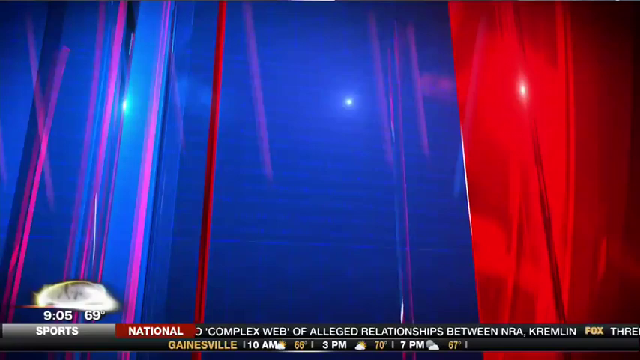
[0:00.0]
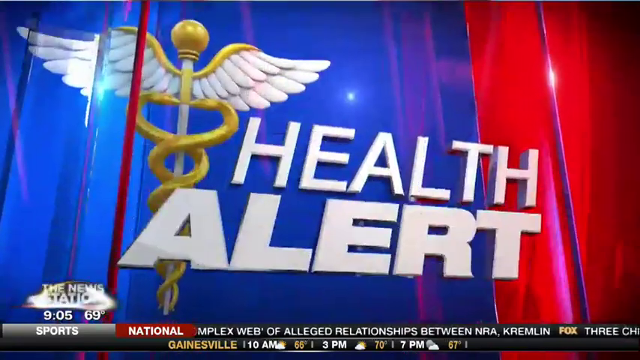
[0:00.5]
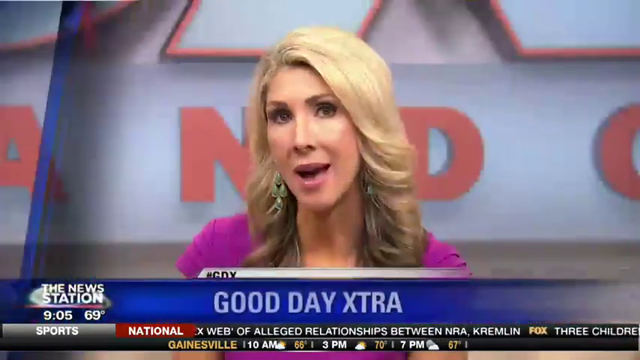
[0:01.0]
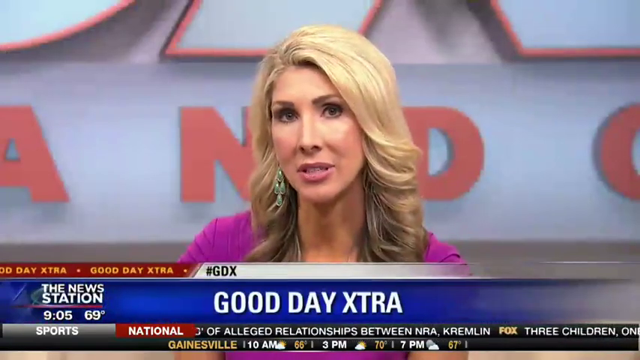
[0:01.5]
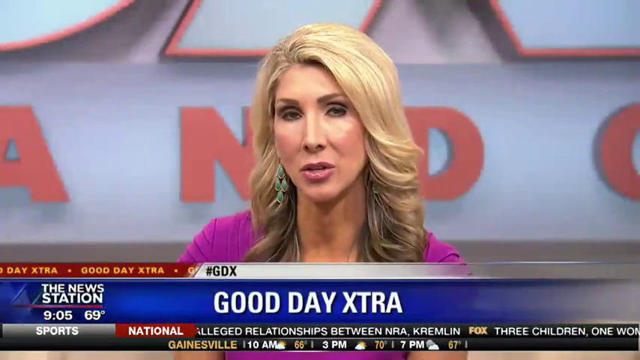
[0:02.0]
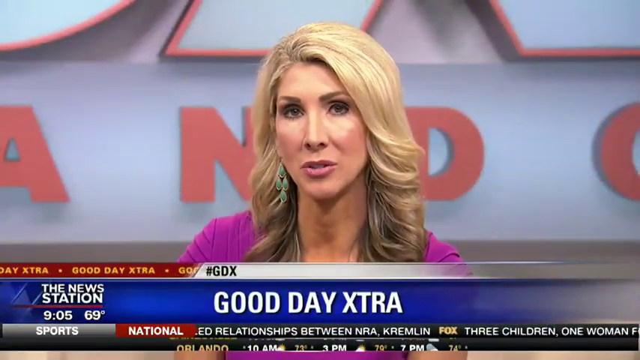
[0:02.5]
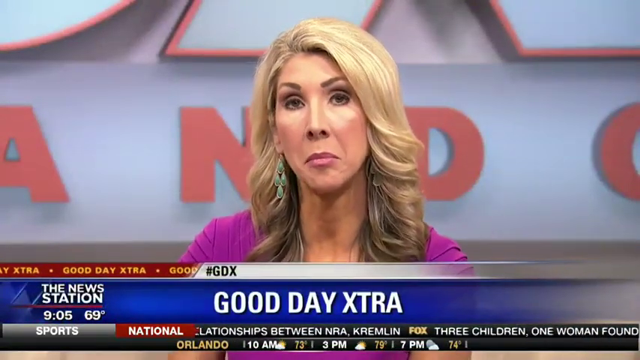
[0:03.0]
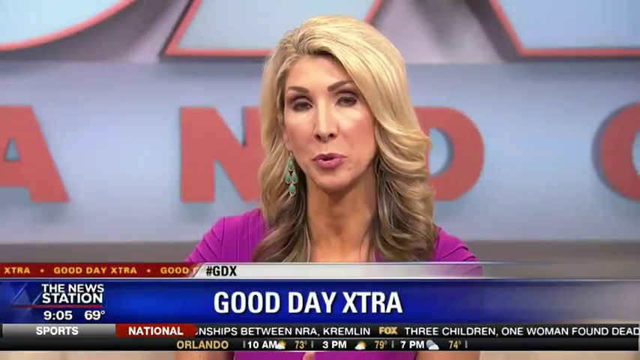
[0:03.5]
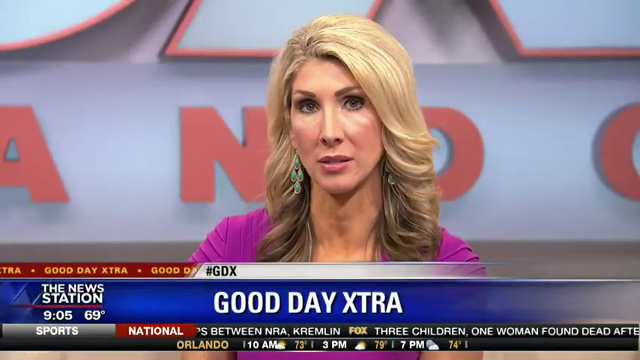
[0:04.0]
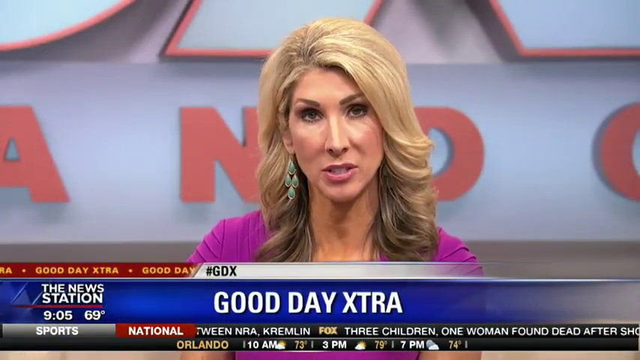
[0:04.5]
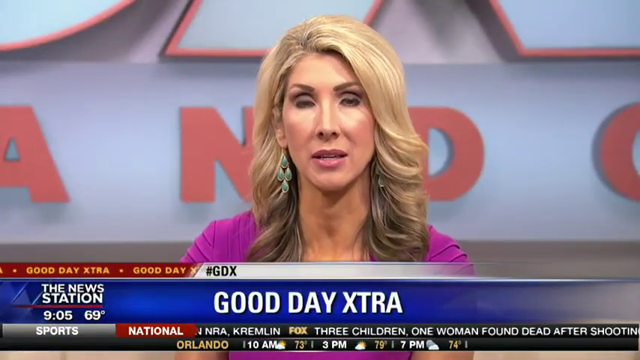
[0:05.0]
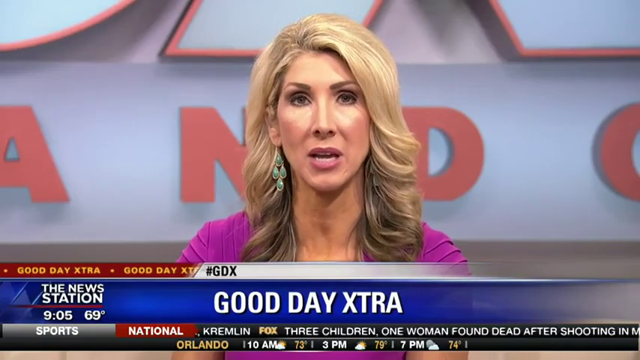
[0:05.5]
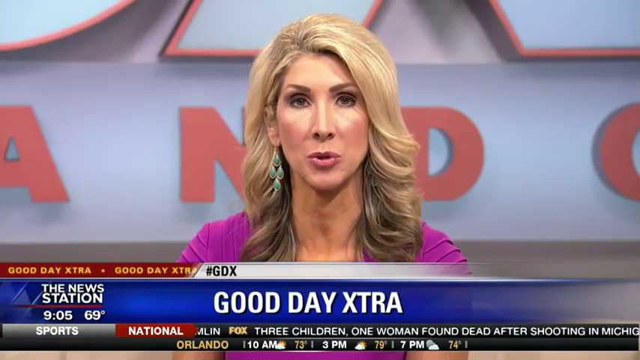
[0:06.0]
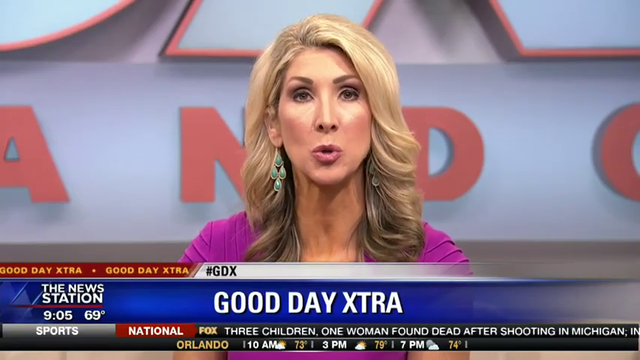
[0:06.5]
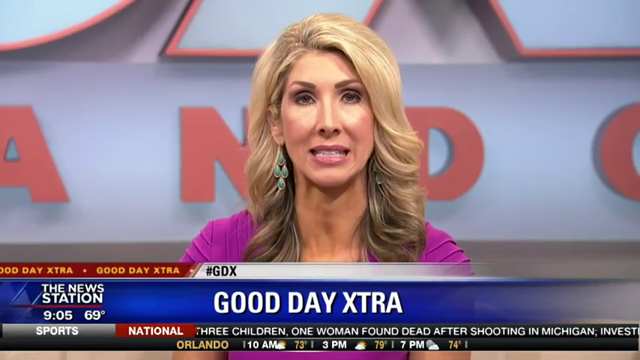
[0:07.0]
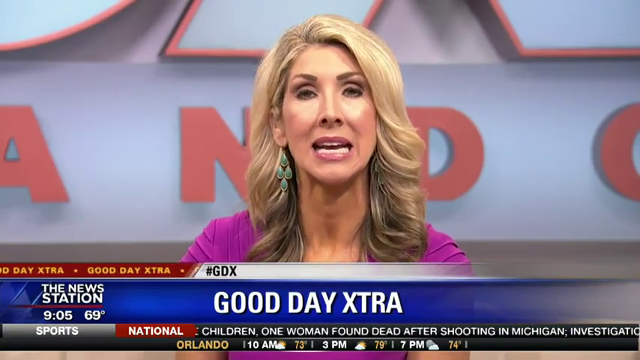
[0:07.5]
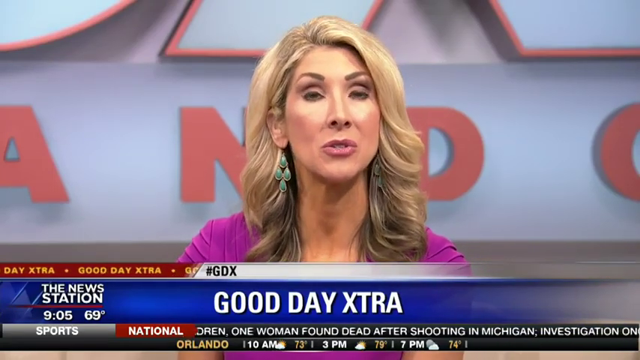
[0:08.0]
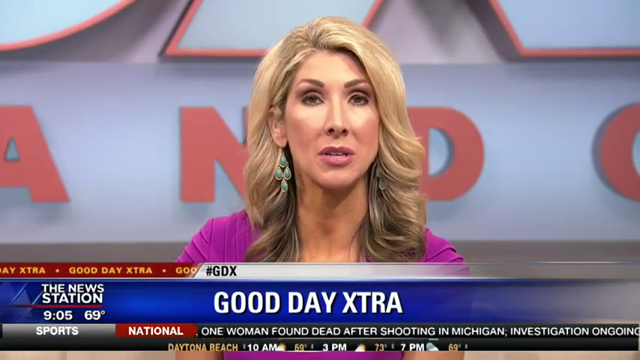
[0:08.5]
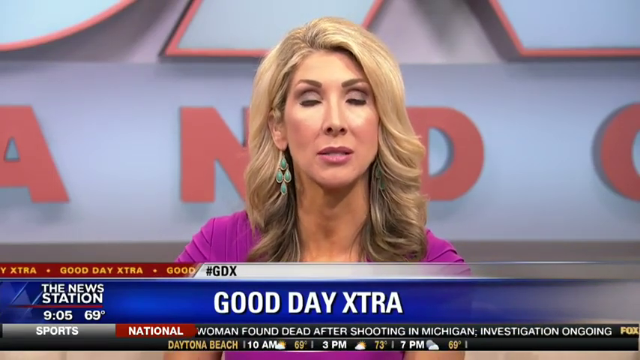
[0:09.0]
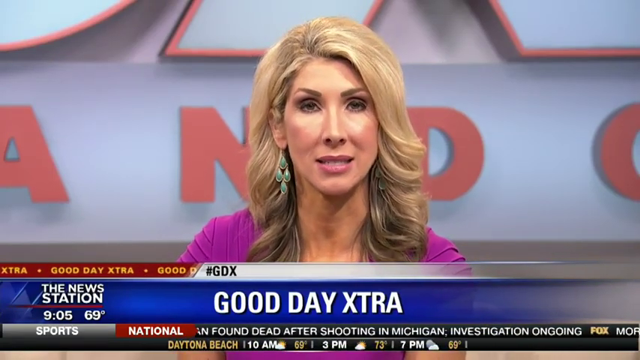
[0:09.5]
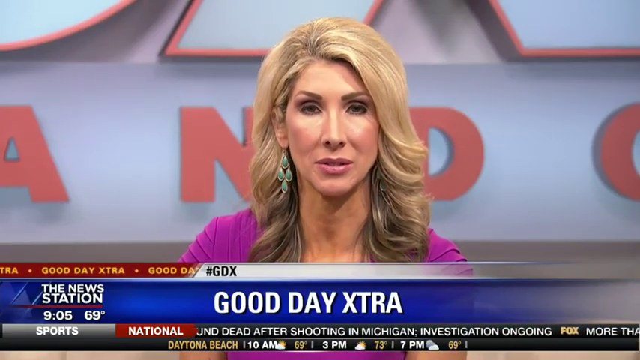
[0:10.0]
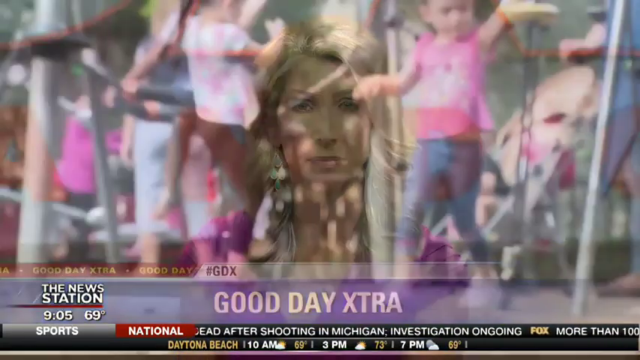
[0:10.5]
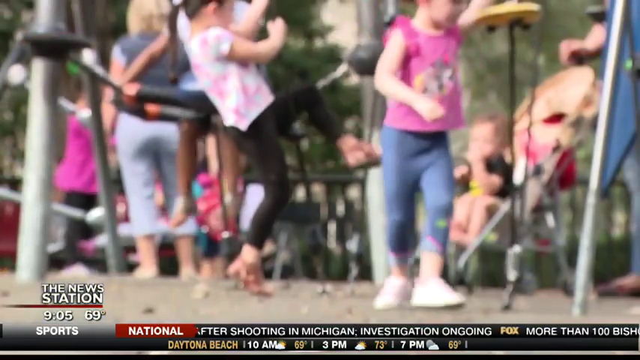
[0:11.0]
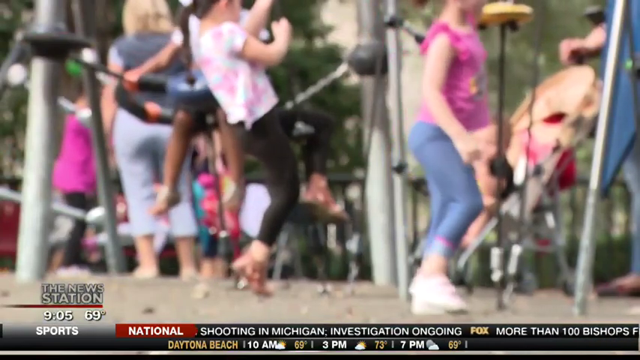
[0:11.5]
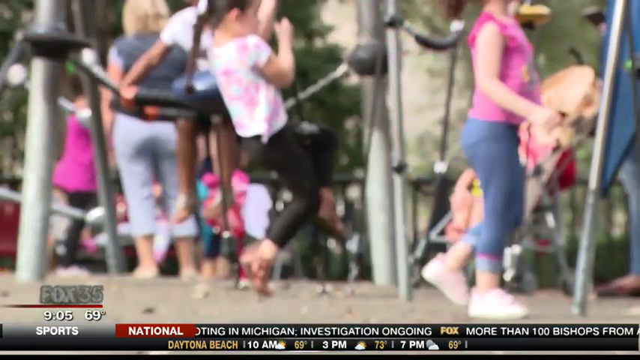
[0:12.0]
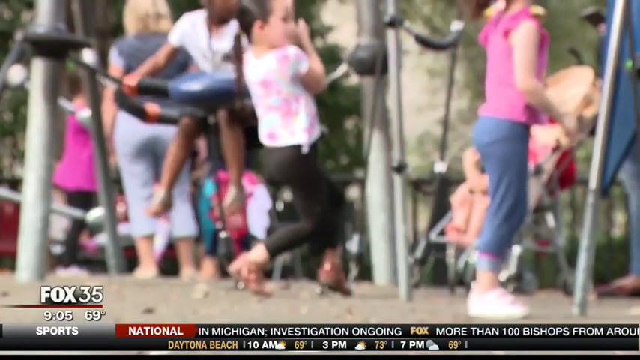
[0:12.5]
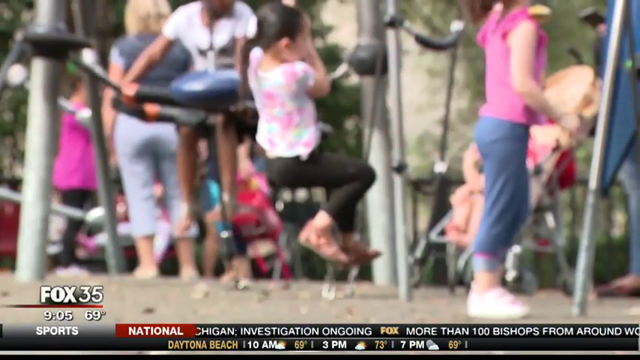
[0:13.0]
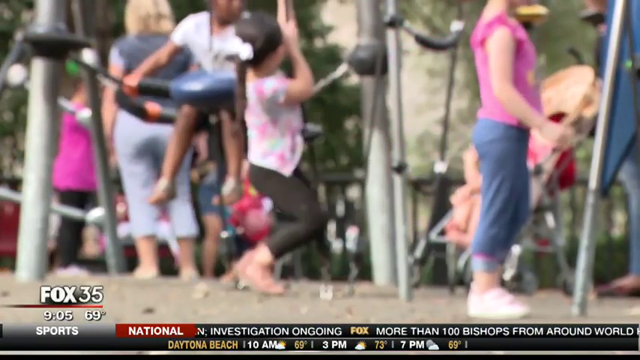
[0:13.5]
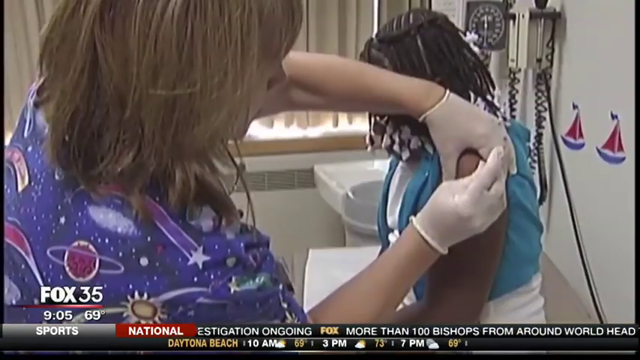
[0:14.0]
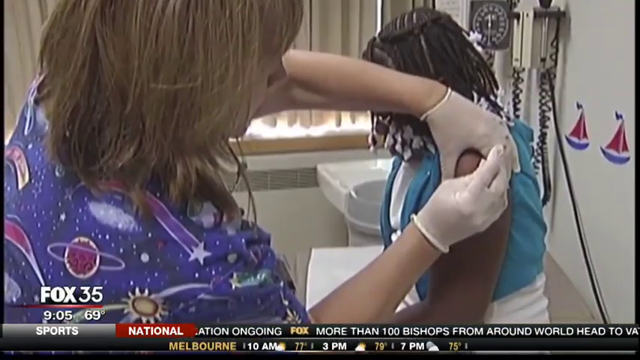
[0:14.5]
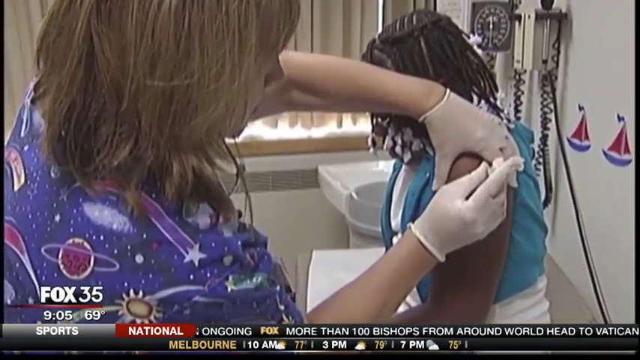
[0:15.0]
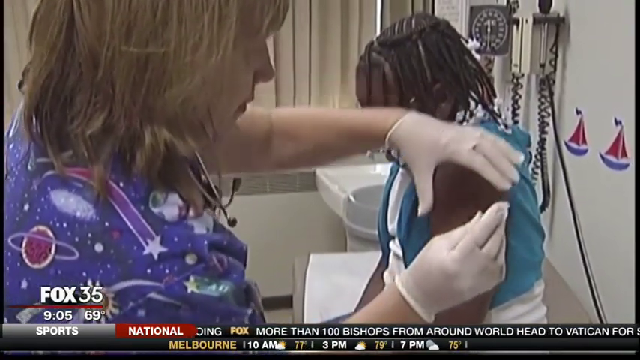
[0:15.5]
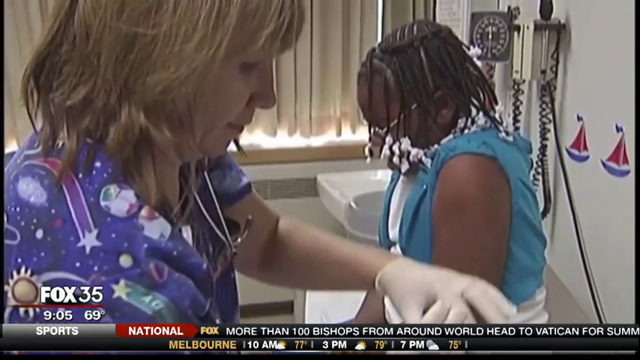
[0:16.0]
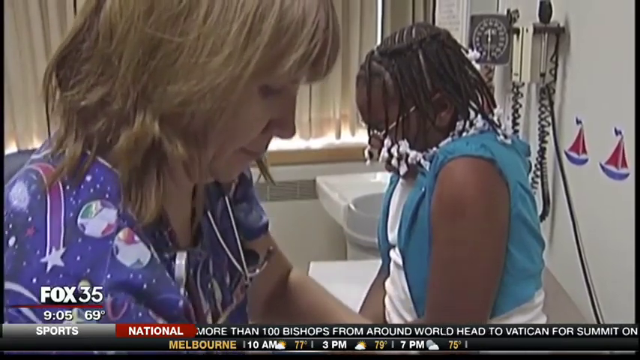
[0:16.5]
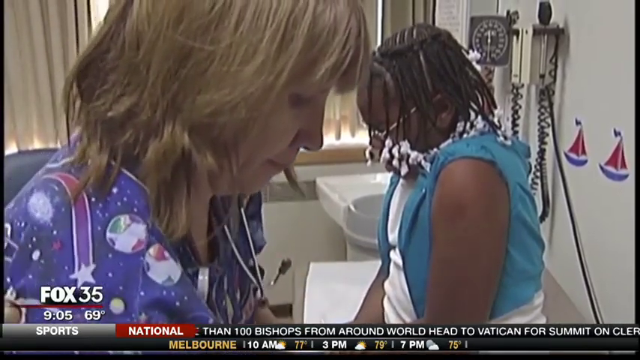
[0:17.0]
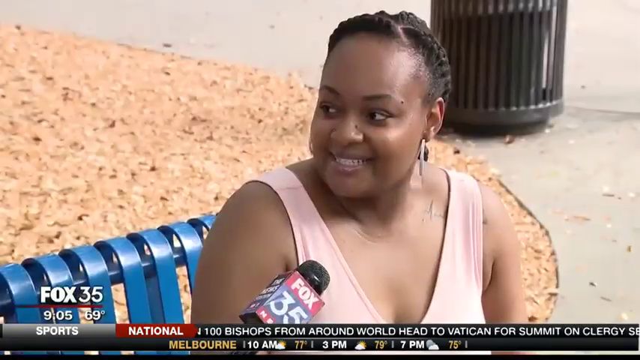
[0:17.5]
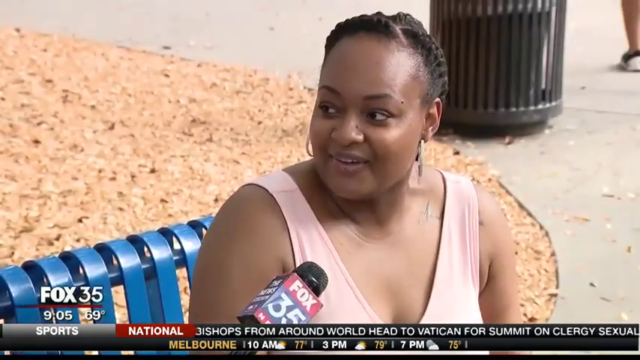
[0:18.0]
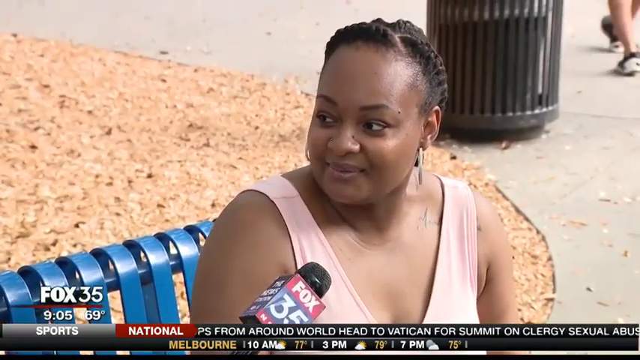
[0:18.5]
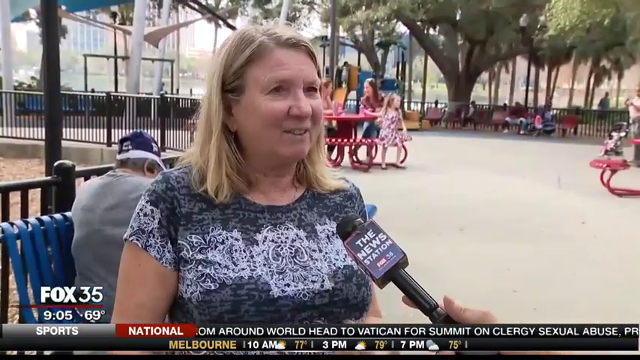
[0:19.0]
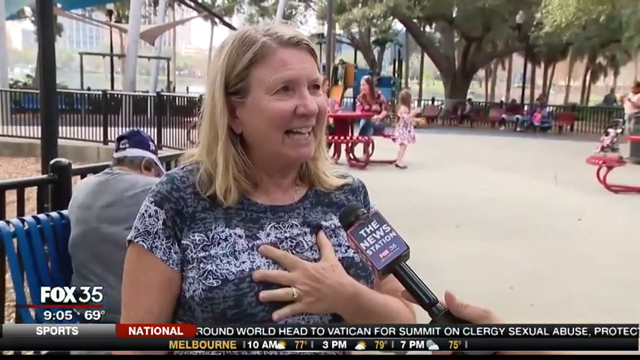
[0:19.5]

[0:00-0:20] The video opens with a health alert for a news broadcast: a blue and red graphic with red stripes going up and down the screen, a medical symbol with two snakes curling around a rod and angel wings coming out of the top, and the white letters "HEALTH ALERT". It quickly moves to a white blonde woman wearing green dangle earrings speaking to the camera. Graphics at the bottom of the screen say "GOOD DAY EXTRA" with the hashtag "#GDX", and a red ticker on the left side of the banner rolls "GOOD DAY EXTRA". The scene switches to children playing in a park, then quickly changes to an African American child wearing glasses and what appears to be a face mask in a doctor's office, being vaccinated by a Caucasian nurse. The nurse wears a blue scrub with a nighttime pattern of planets and stars and has her stethoscope draped across the back of her neck. Next, an African American woman sitting on a blue park bench speaks to the camera, followed by an older white woman, also with blonde hair, speaking to the camera in a black and white, kind of goth-design shirt.